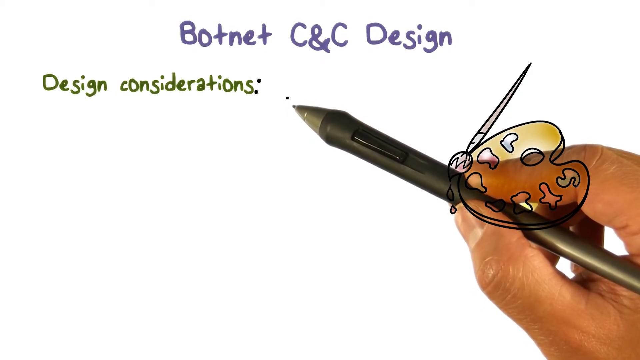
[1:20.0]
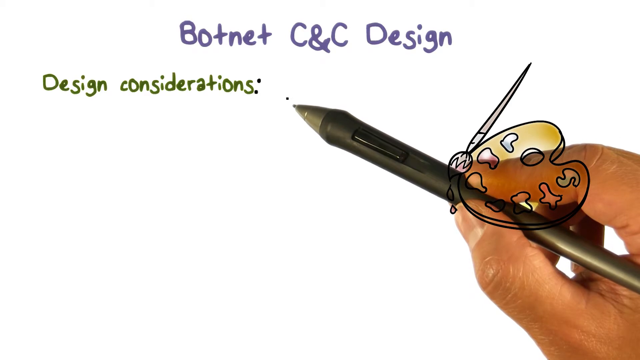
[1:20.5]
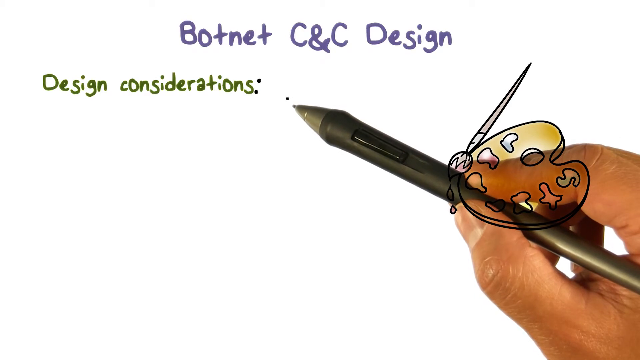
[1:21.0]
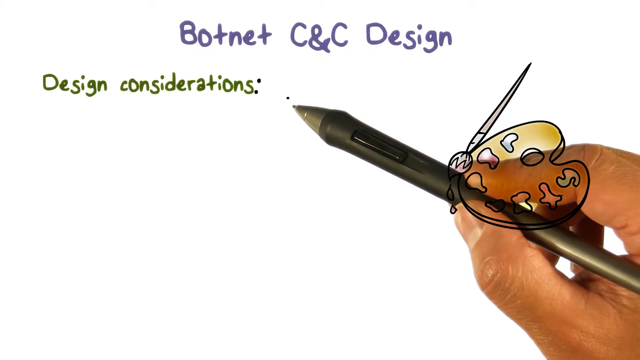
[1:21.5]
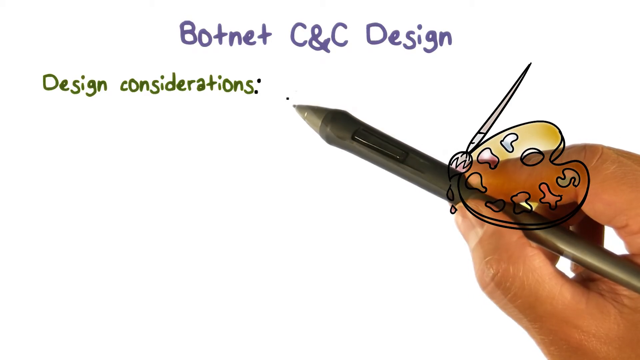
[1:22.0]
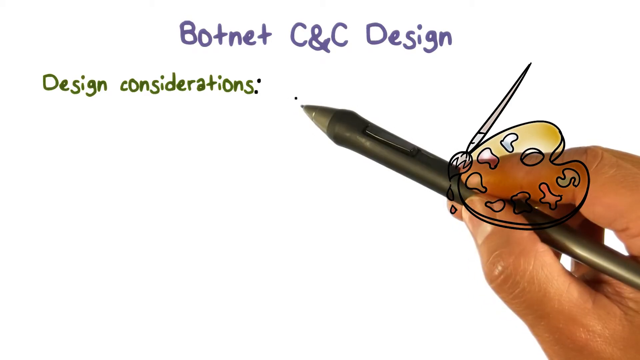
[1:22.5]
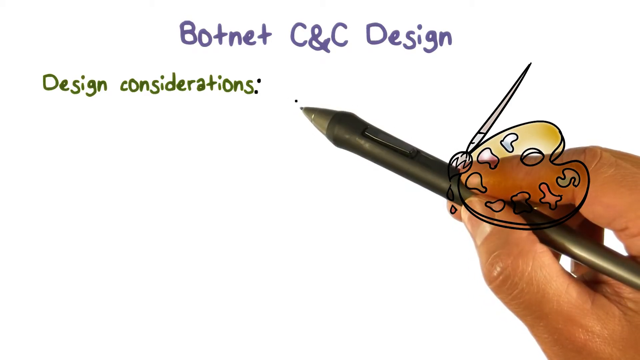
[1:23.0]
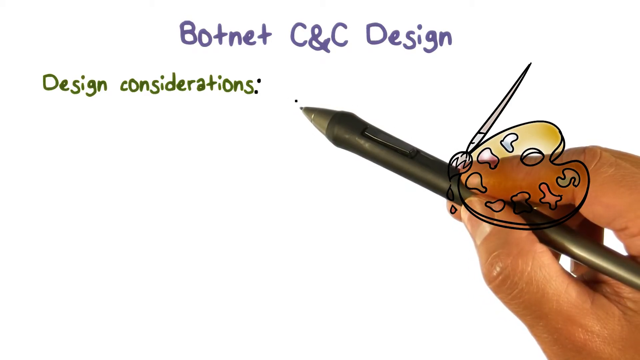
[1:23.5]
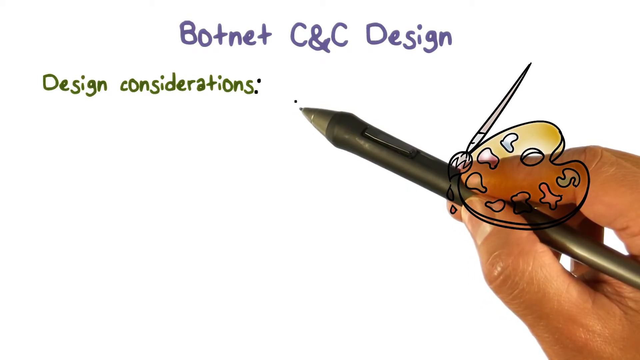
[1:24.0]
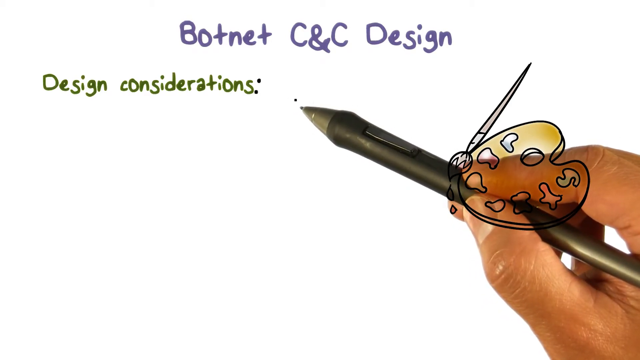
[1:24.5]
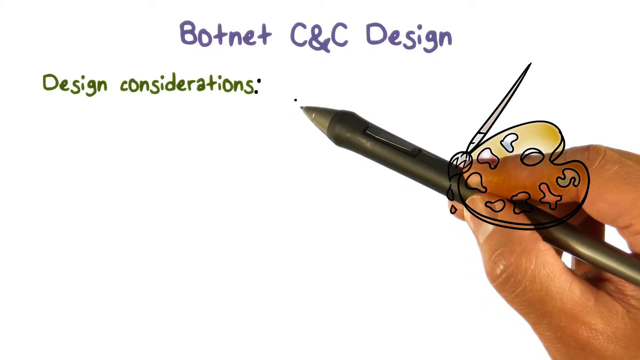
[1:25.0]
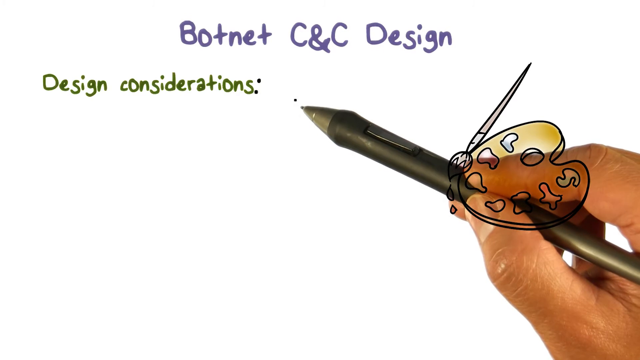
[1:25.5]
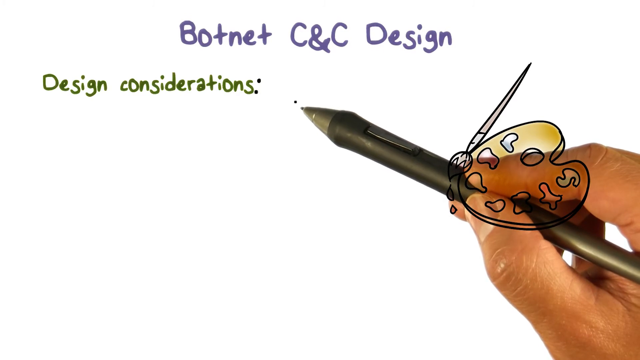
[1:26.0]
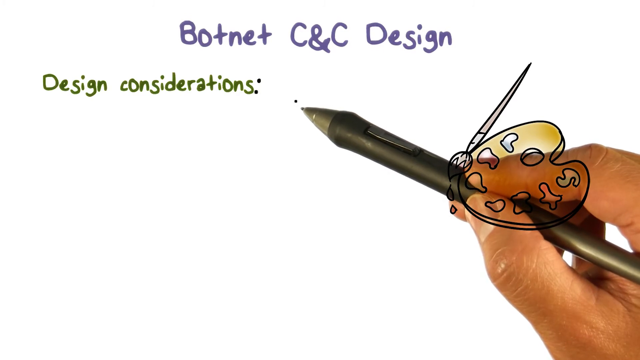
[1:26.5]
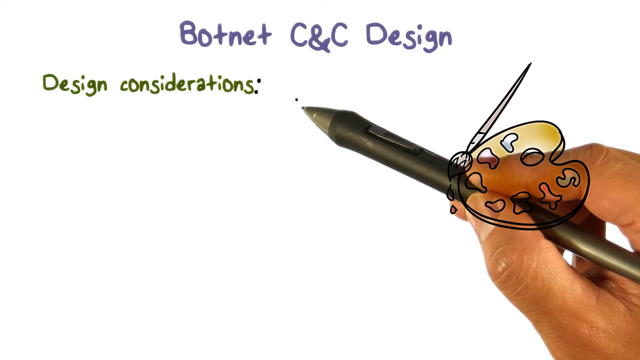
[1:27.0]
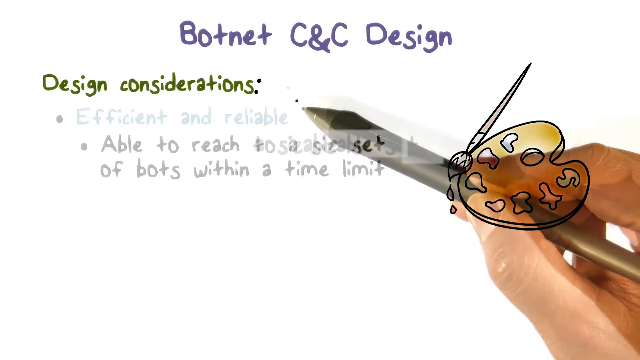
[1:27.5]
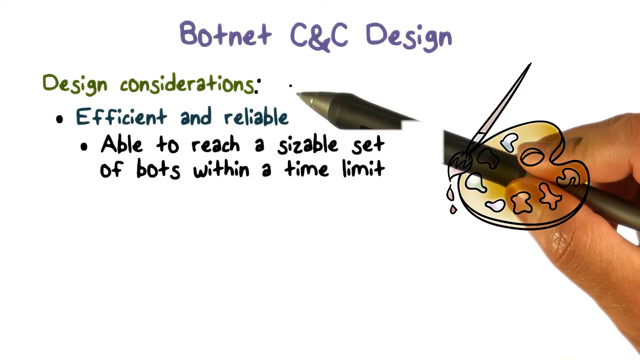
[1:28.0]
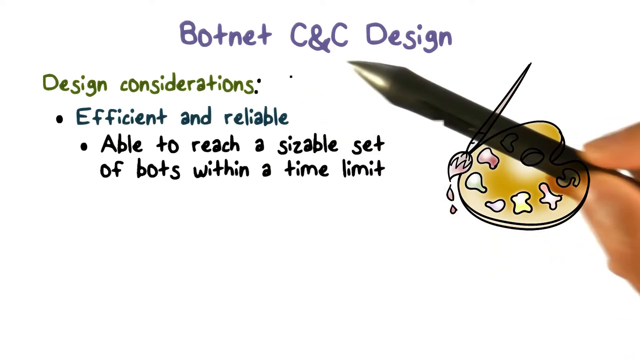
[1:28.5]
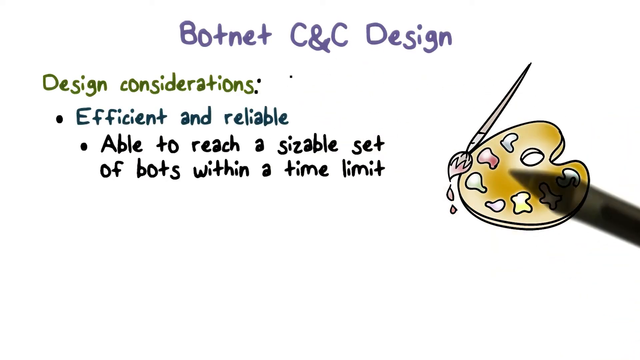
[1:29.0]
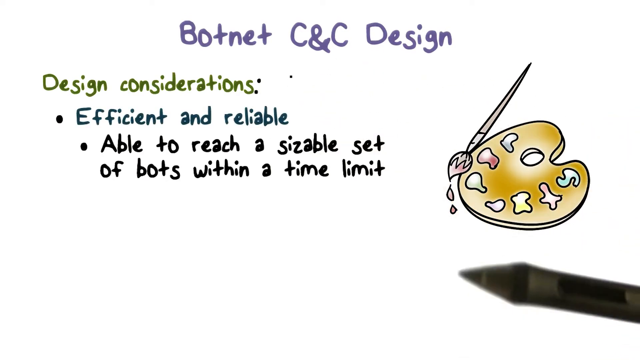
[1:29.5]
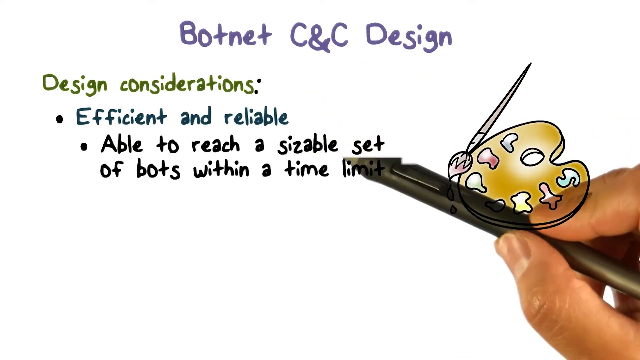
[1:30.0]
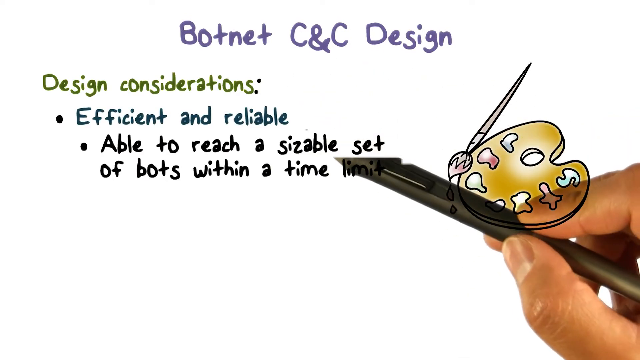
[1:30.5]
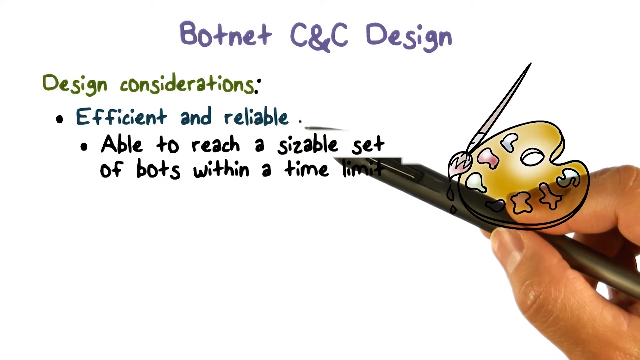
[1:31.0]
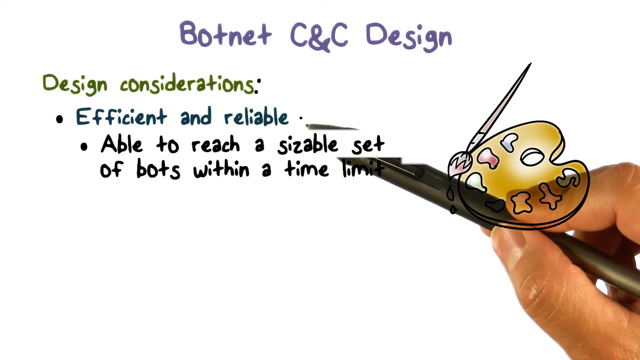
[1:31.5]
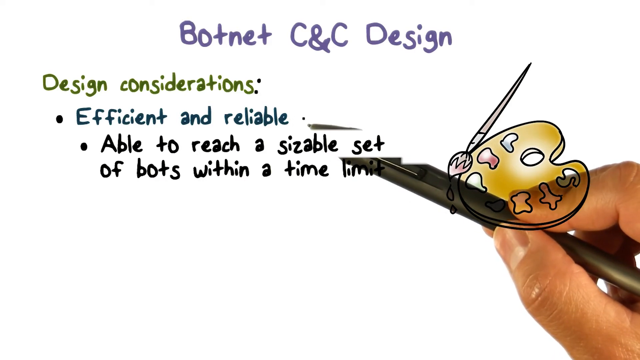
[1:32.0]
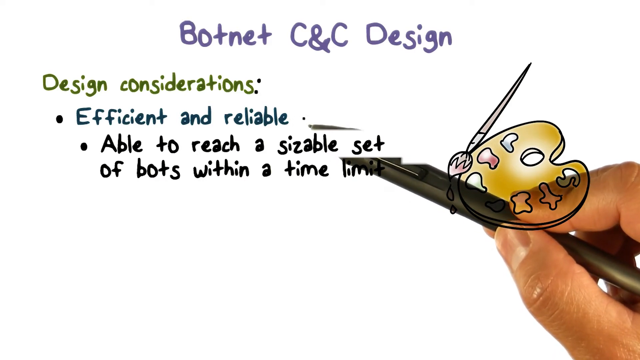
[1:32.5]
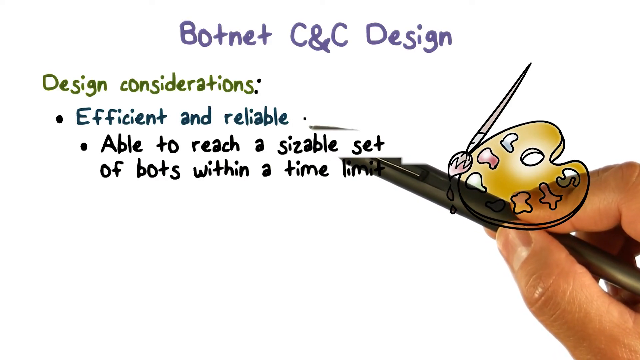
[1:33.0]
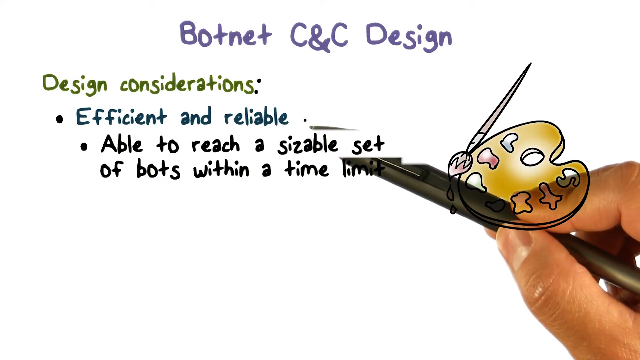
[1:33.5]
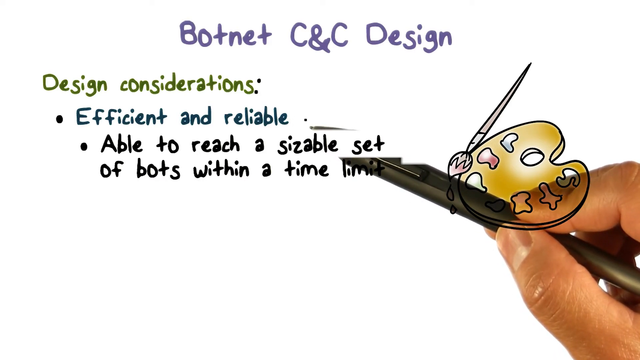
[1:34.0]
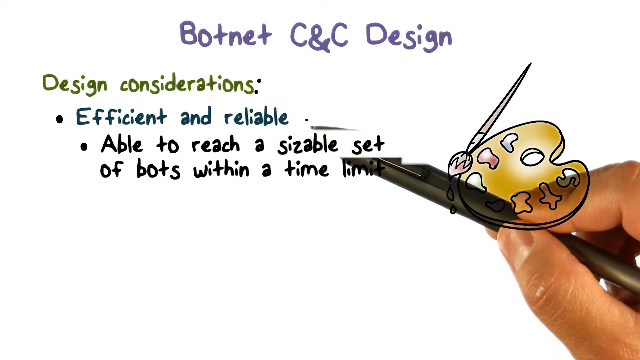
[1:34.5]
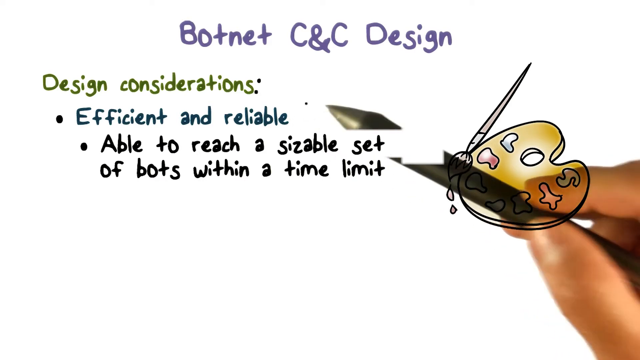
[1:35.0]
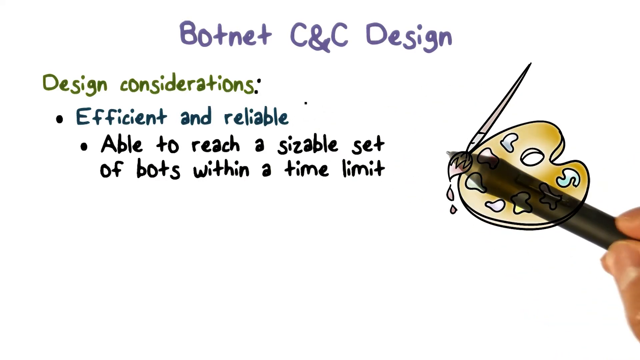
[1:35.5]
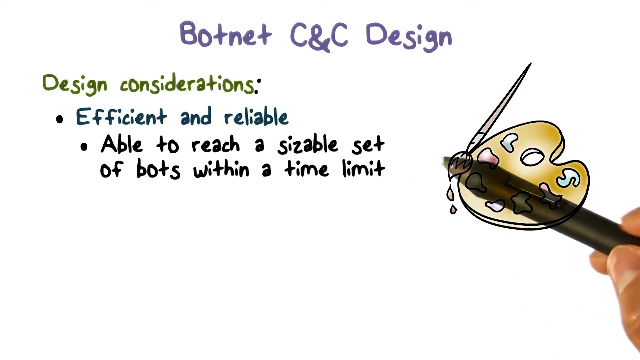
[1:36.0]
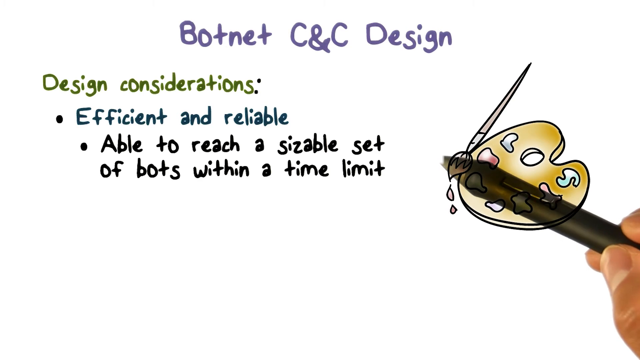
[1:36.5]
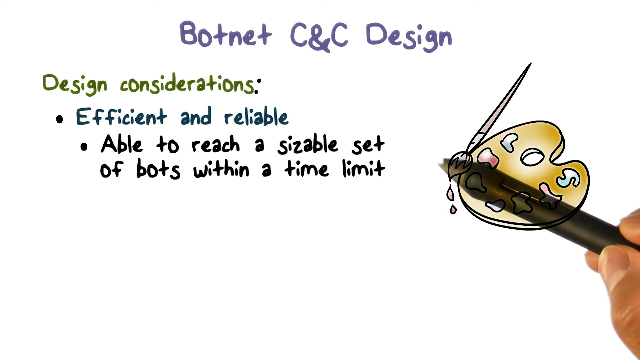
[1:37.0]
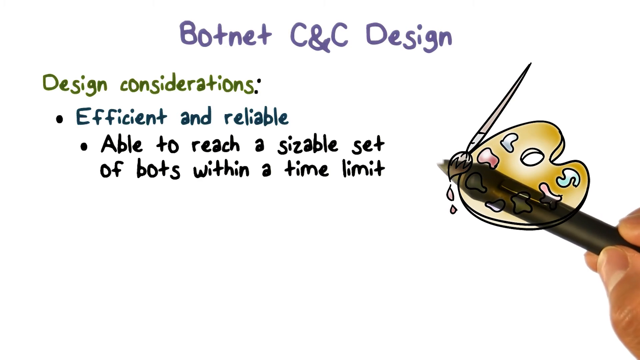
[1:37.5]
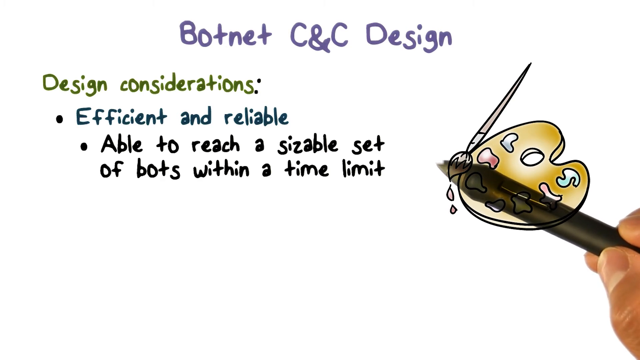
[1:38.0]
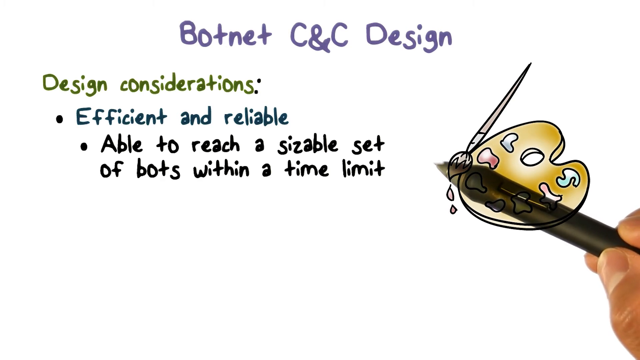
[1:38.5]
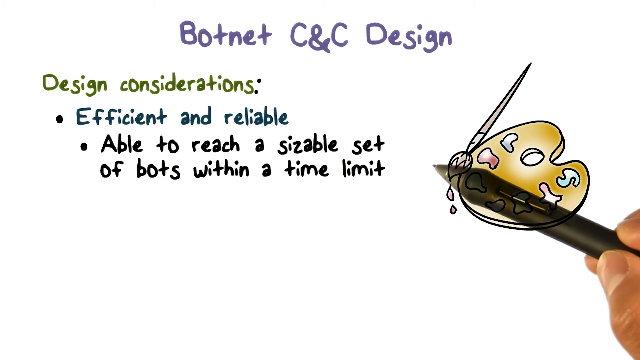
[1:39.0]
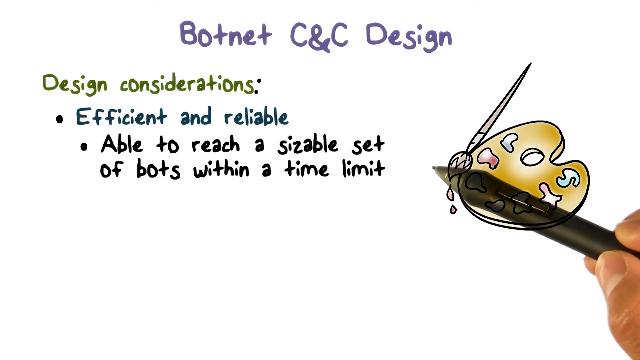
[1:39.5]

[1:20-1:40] The slide shows "botnet cnc design" at the top in blue text, with green text reading "design considerations" right below. The cartoon image of the brush and easel, with different paint colors on it, remains on the right-hand side of the screen. The hand takes up more space now, and the pen stretches further across the screen toward the green text, hovering at the back of it until new text appears within the green text section: first a blue bullet point reading "efficient and reliable," and within it black text reading "able to reach a sizable limit of bots within a time limit." The pen first moves across the blue text, hovering behind it, then quickly moves down to the black text and hovers behind it as well.